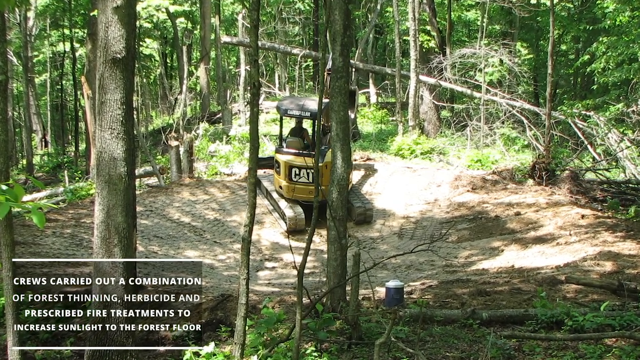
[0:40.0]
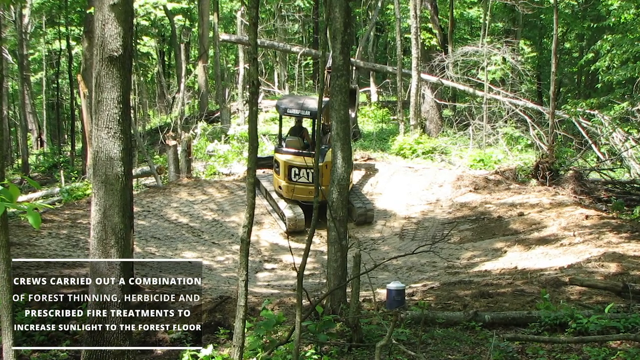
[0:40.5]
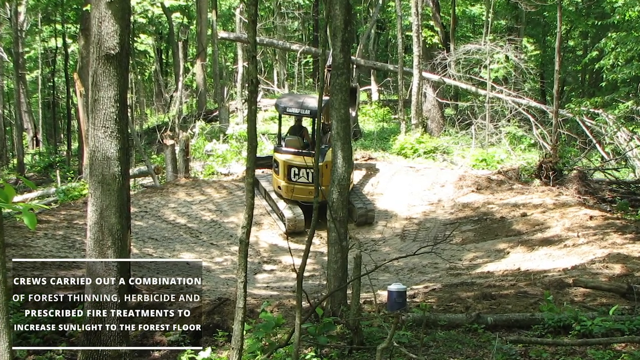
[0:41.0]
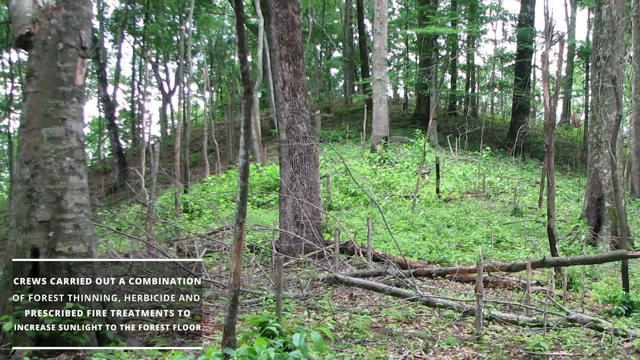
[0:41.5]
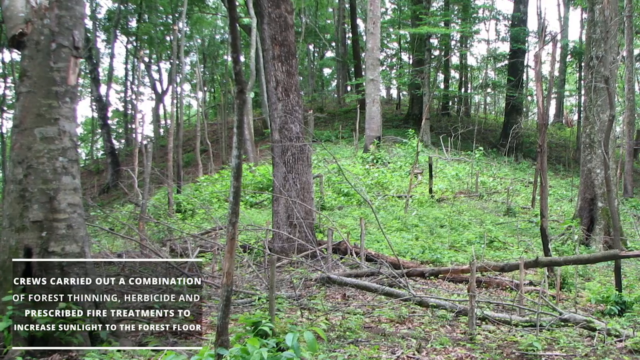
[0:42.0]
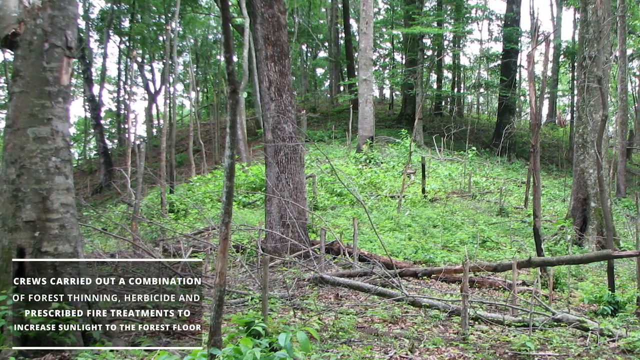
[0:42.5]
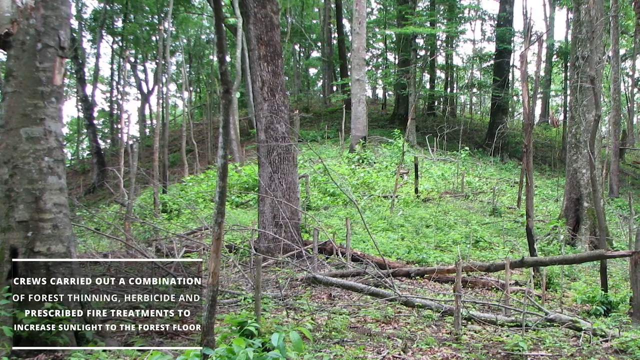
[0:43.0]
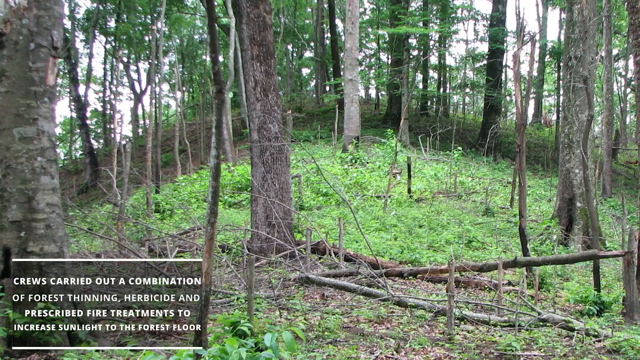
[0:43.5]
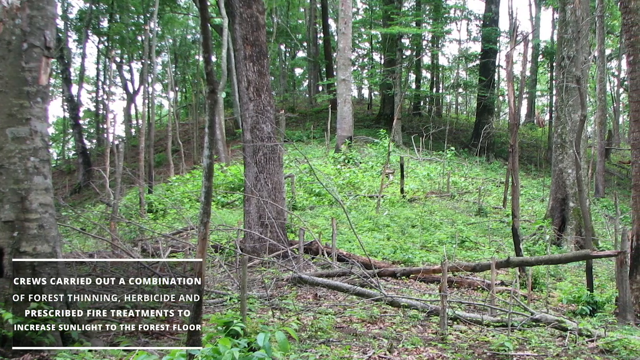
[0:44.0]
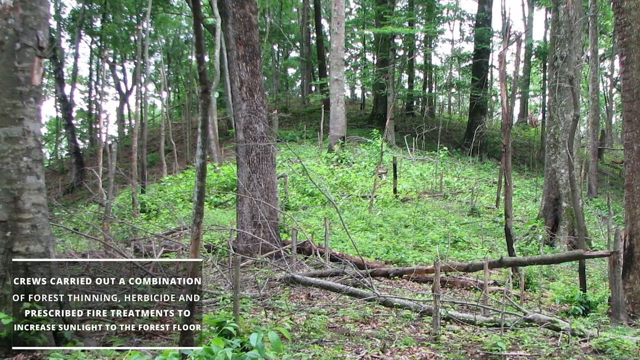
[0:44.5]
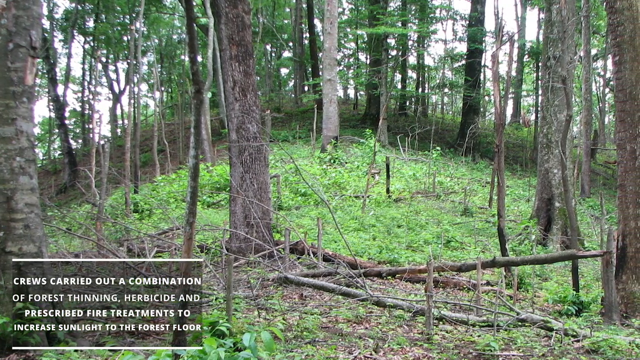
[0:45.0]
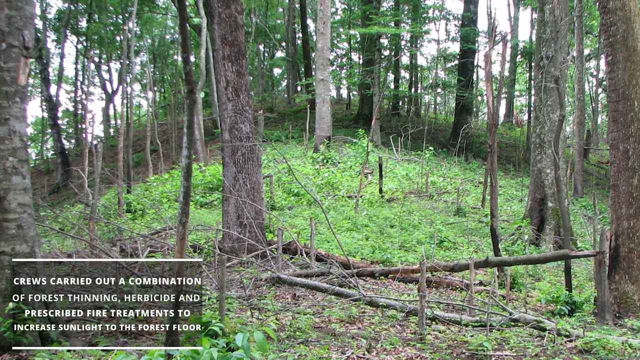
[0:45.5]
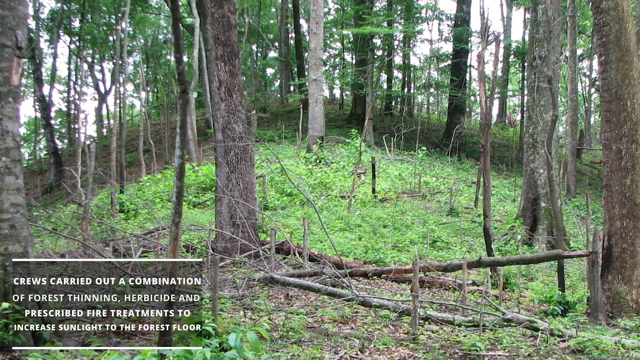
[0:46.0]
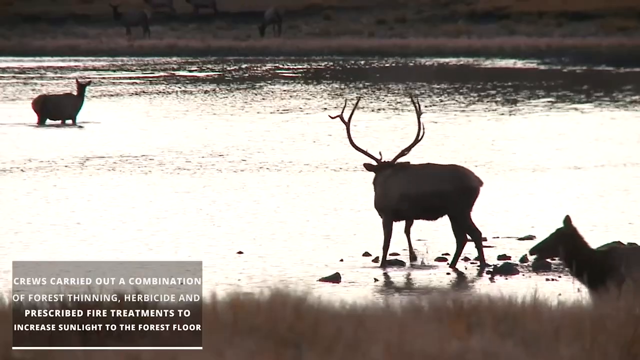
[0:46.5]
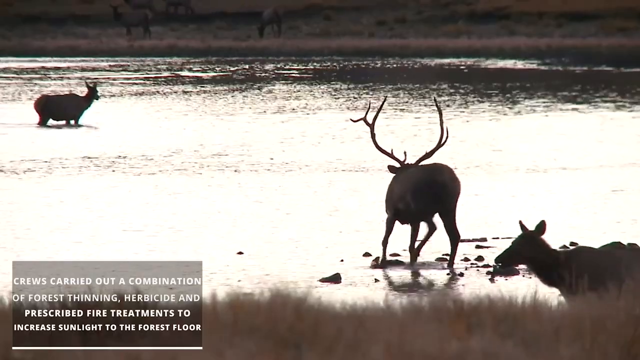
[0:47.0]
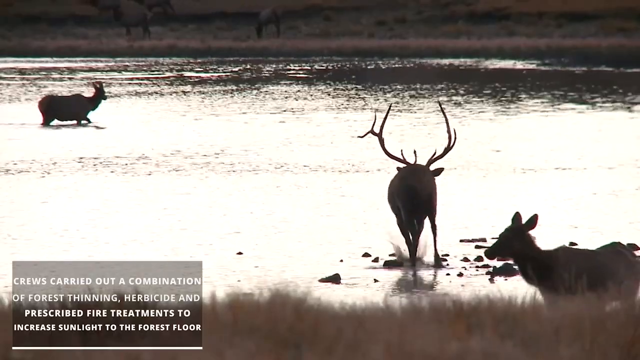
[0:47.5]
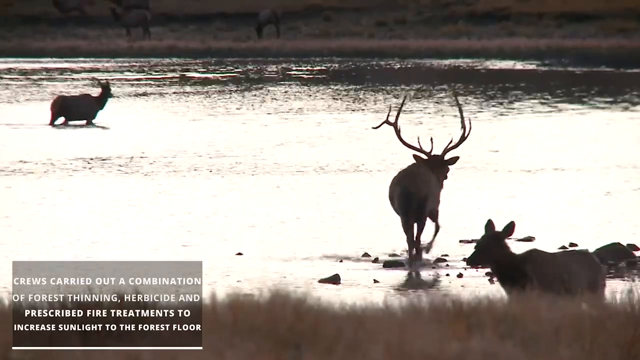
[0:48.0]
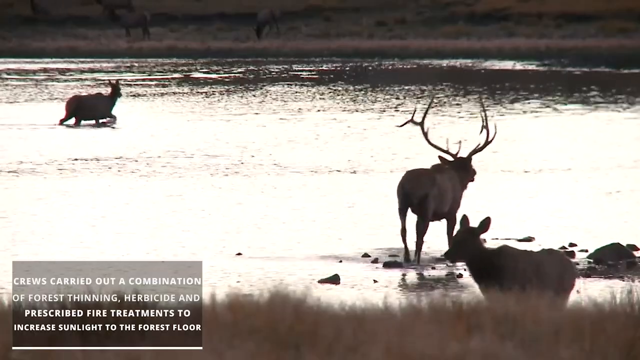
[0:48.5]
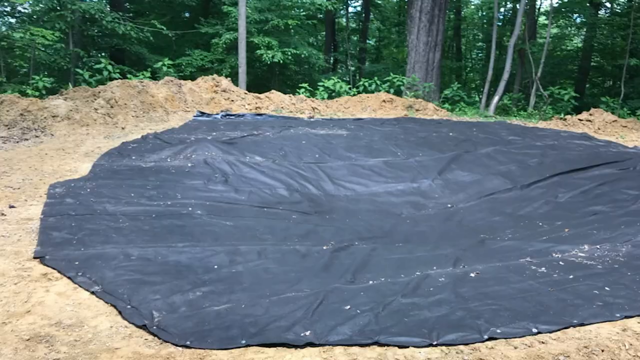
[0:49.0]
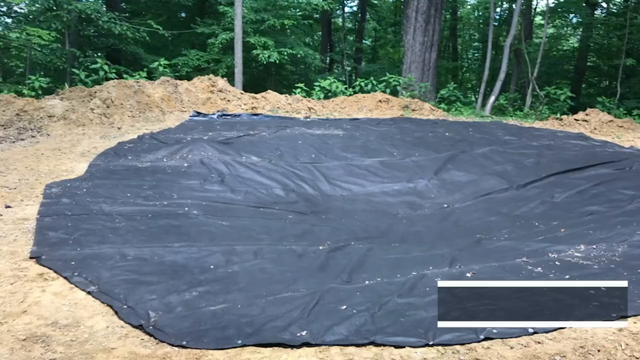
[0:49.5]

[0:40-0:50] An image of a machine in a forest changes to another static image of a forest with a number of trees that look like they have been thinned or cut down, with text in the bottom left-hand corner about crews carrying out thinning on the forest to increase sunlight. It cuts to a number of elk, one with large antlers, by a river, then changes to a large black tarp over a pile of dirt that appears to be surrounded by forest. A small text box appears in the bottom right-hand corner, but its text does not fully enter before the shot ends.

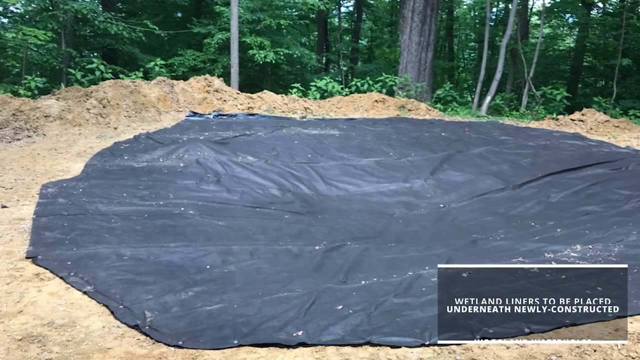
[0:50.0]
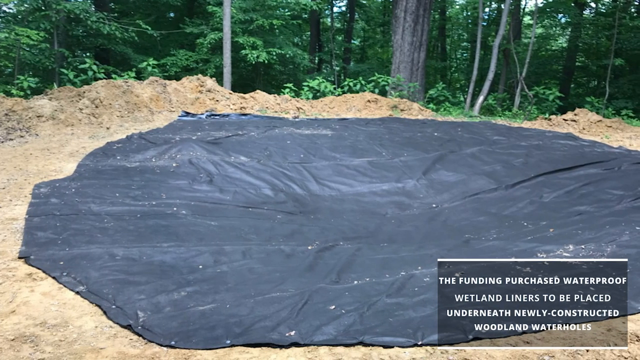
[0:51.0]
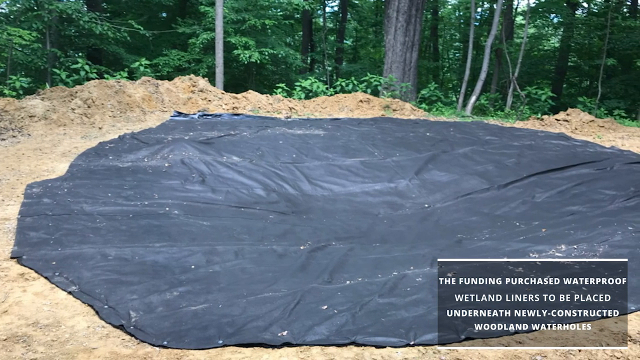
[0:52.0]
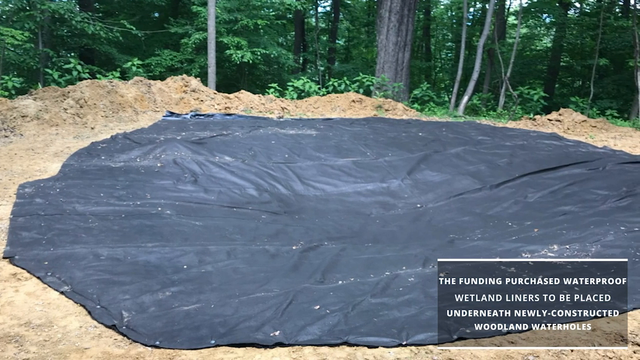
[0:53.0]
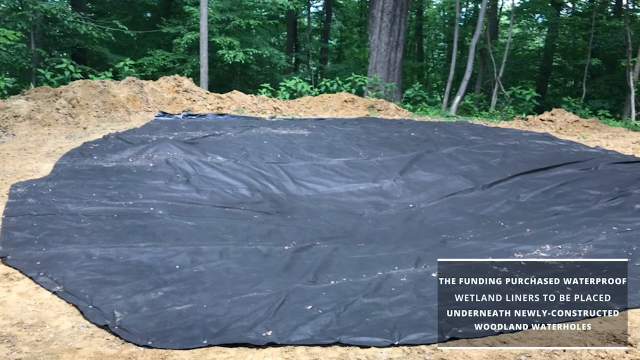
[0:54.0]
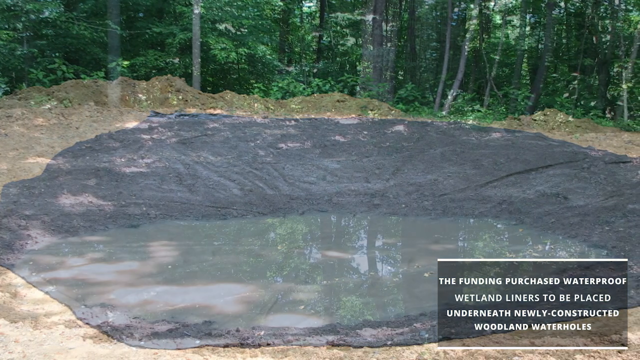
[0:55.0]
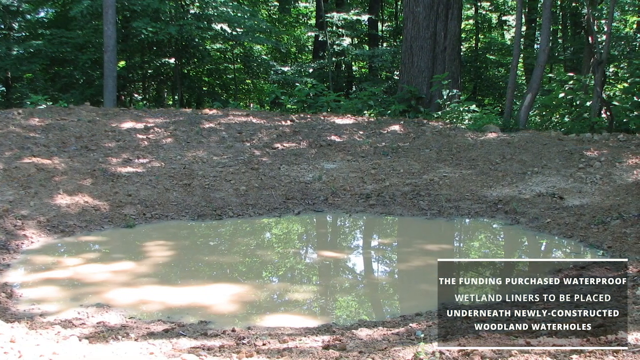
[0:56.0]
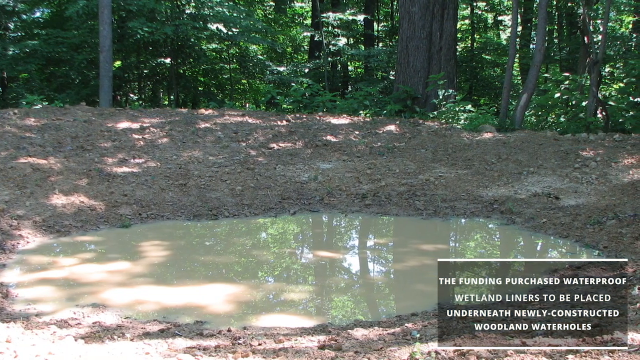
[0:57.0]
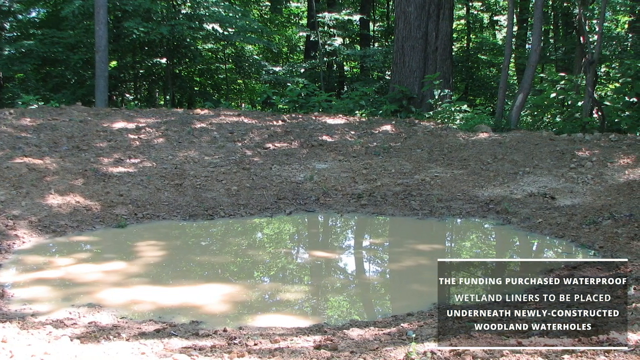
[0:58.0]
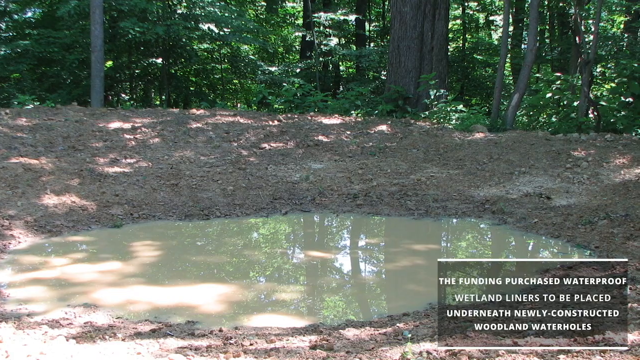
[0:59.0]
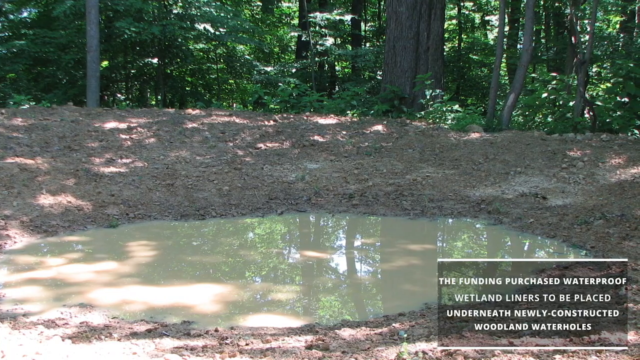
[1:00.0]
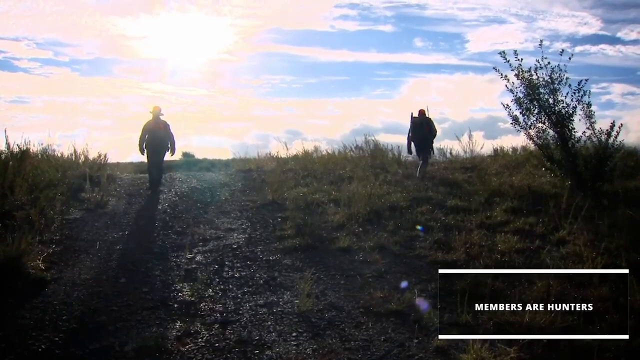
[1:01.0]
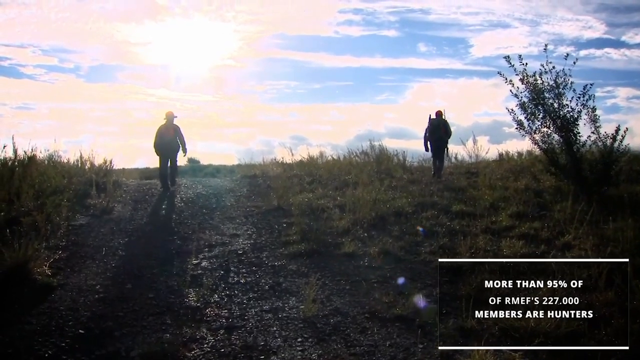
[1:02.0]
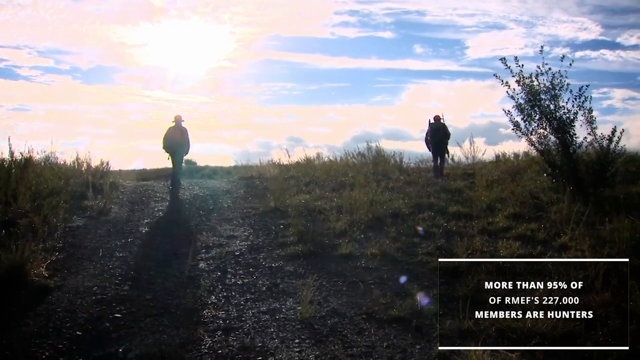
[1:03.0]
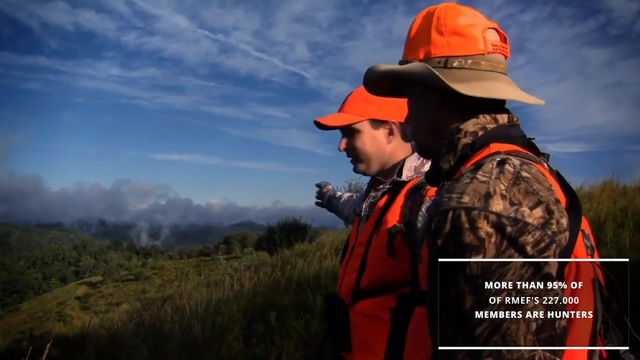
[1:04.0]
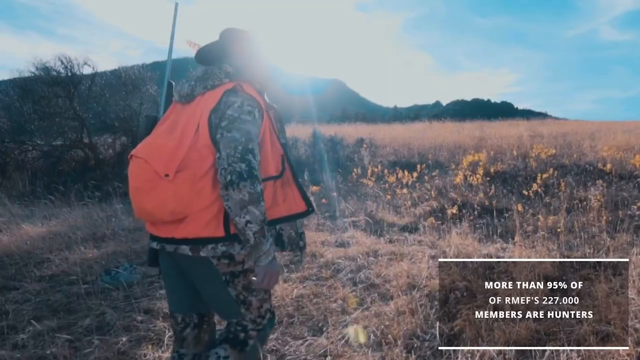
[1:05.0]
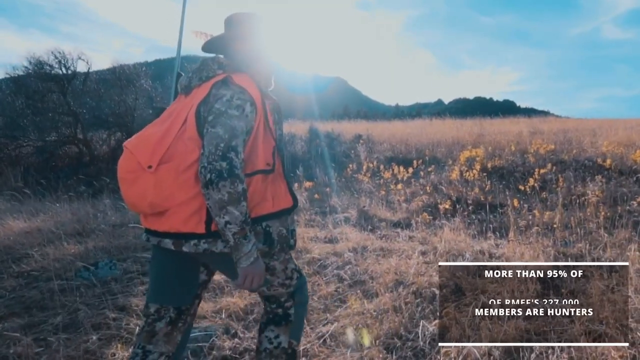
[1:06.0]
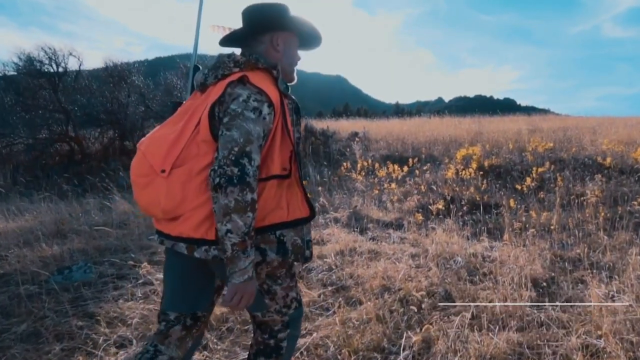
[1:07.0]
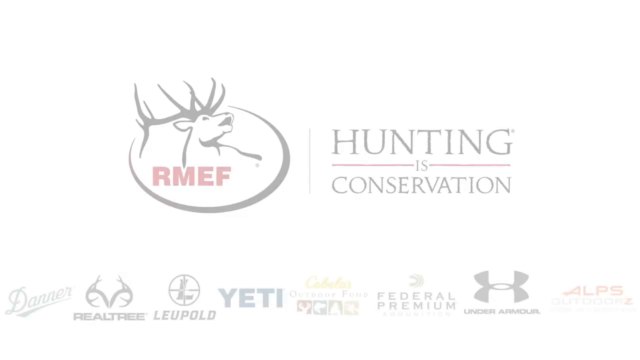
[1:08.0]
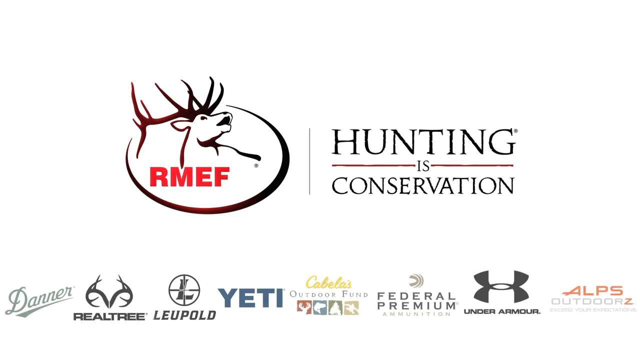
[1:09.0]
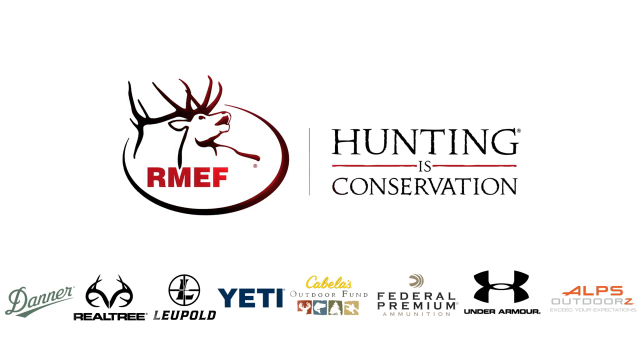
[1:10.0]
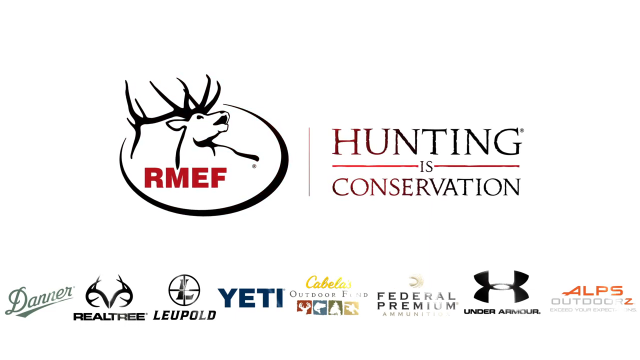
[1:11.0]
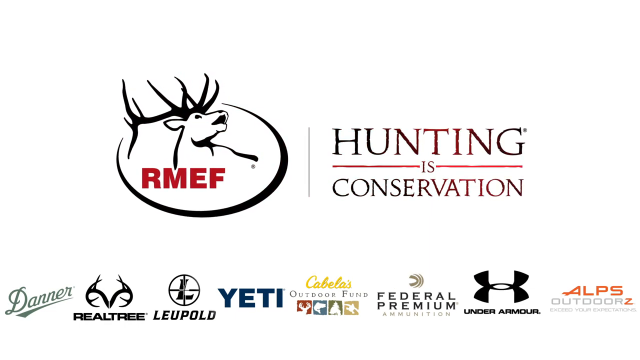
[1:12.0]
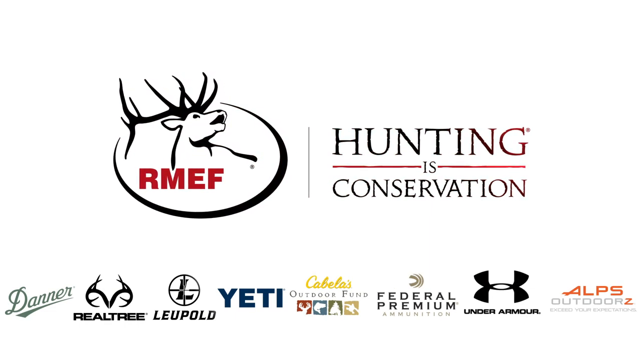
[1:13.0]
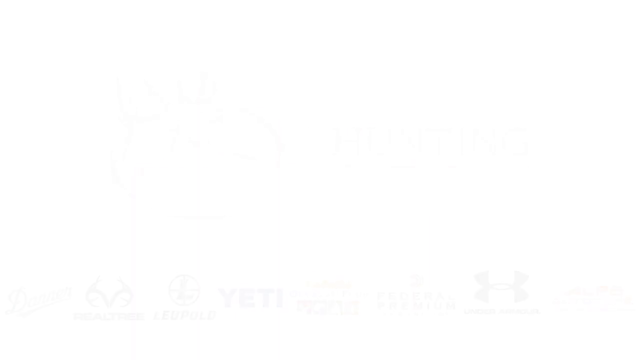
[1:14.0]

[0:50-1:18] A large black tarp is put over dirt in what appears to be a forest, surrounded by trees and greenery. White text in the bottom right-hand corner reads "The funding purchased waterproof wetland liners to be placed underneath newly-constructed woodland waterholes". This changes to a pool of standing water surrounded by dirt in a forest. Next, two people walk in the wilderness, with text reading "More than 95% of RMEF's 227,000 members are hunters". The two wear camouflage and bright orange, and one of them points with his right hand out over the forest. It cuts to one of the hunters walking in slow motion, then changes to a white background with an RMEF logo and the text "hunting is conservation", along with a number of company logos at the bottom, including Realtree and Leupold.